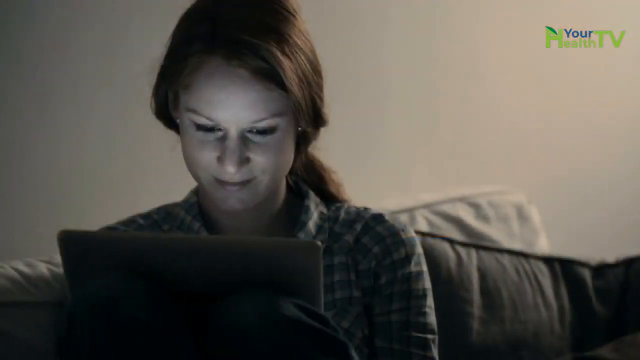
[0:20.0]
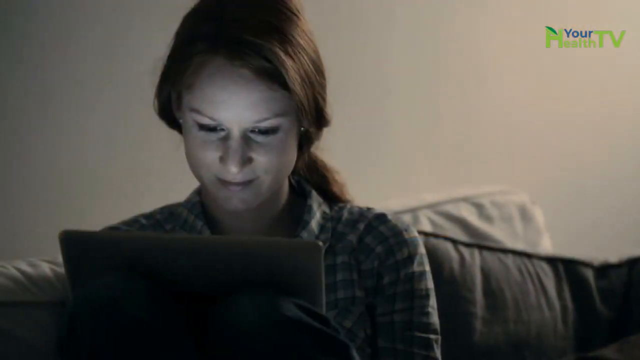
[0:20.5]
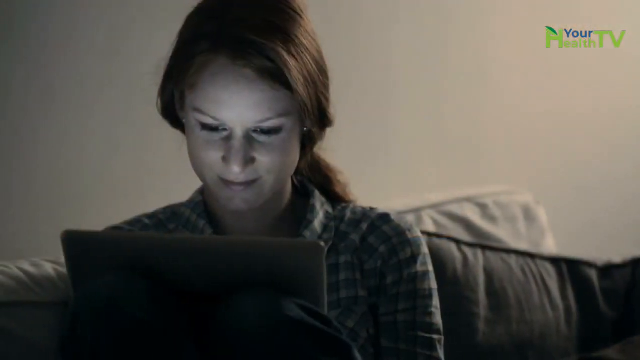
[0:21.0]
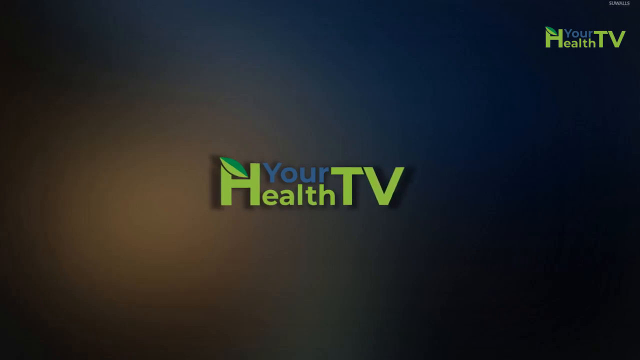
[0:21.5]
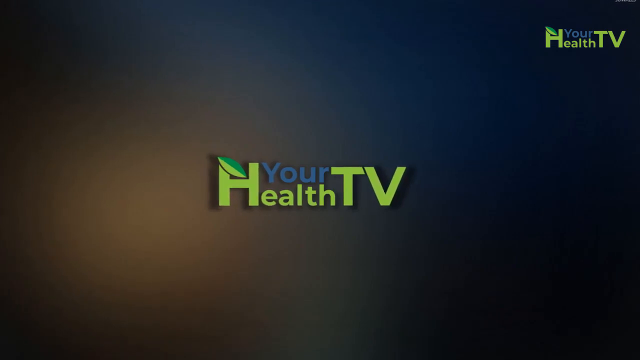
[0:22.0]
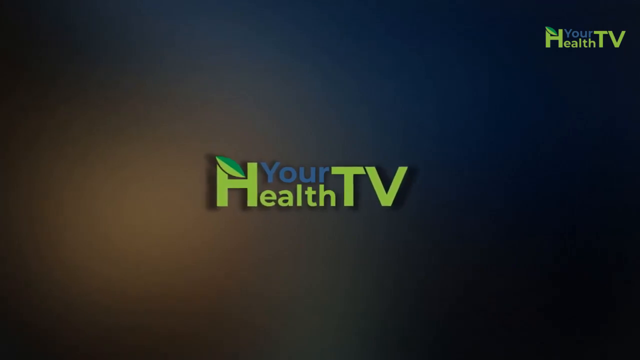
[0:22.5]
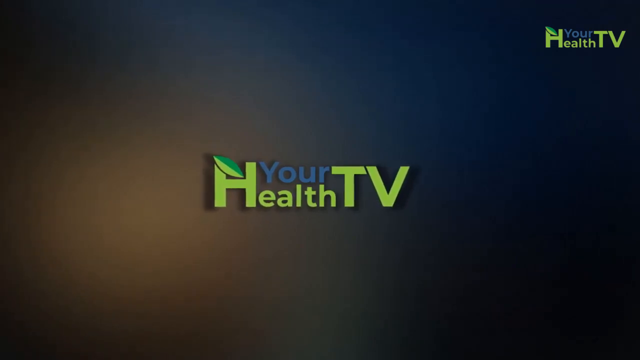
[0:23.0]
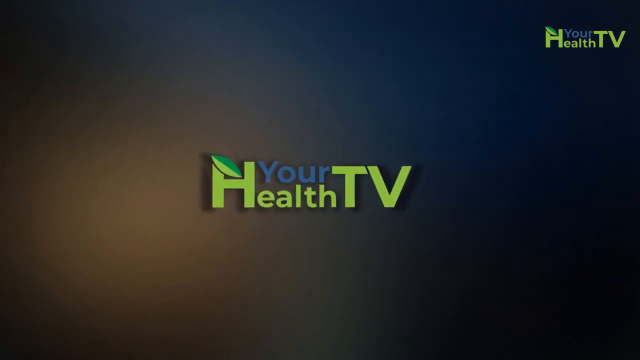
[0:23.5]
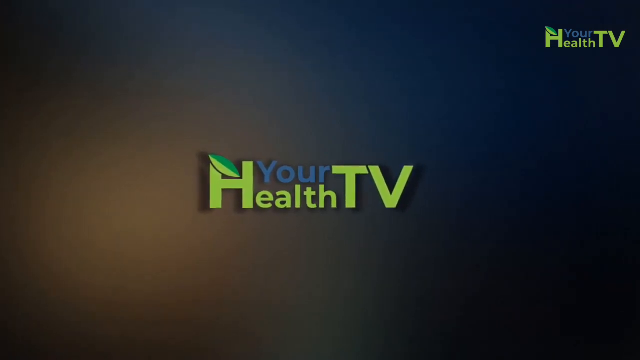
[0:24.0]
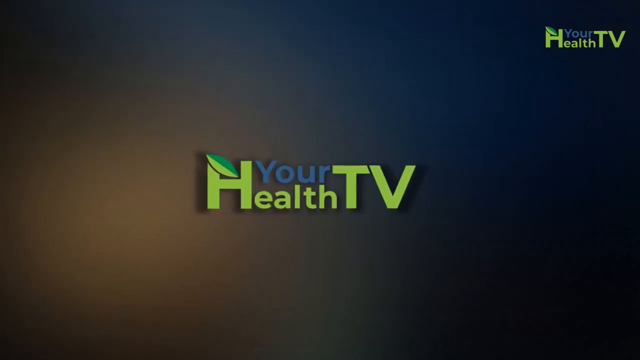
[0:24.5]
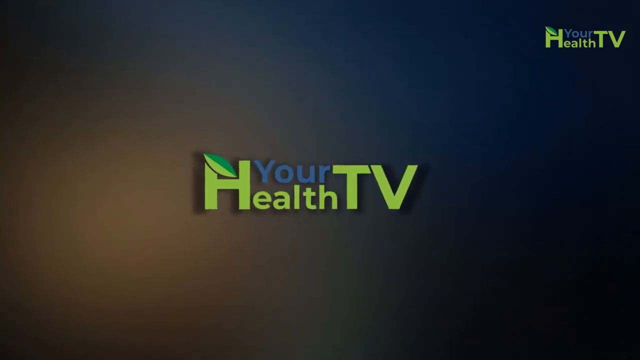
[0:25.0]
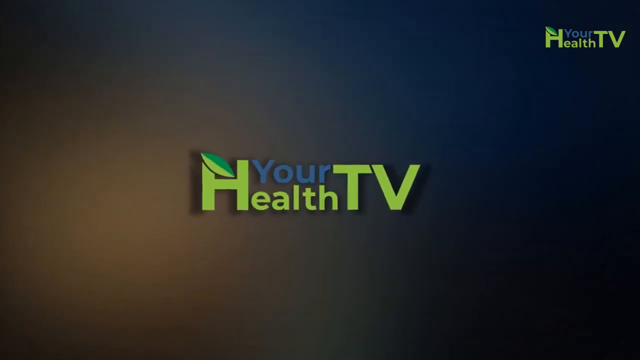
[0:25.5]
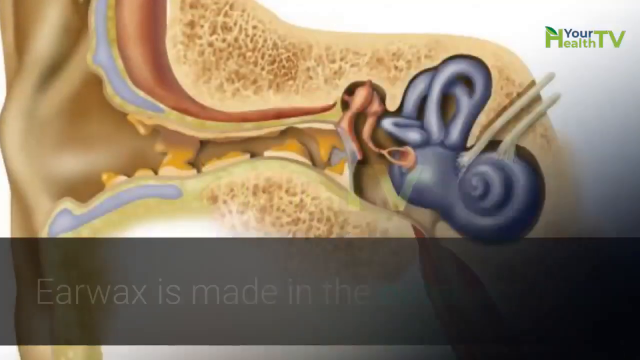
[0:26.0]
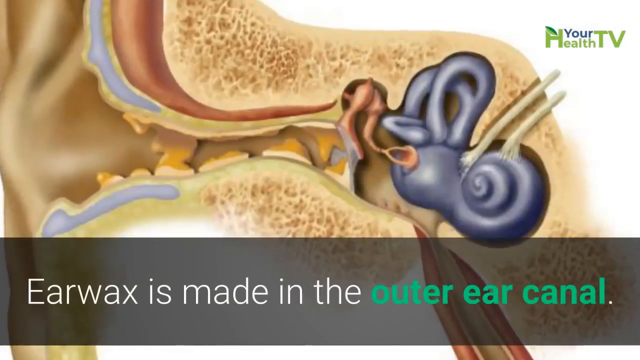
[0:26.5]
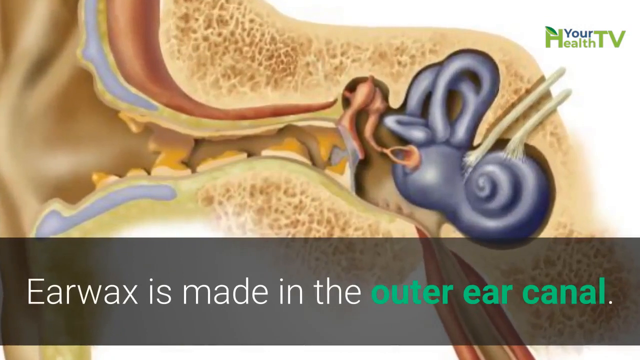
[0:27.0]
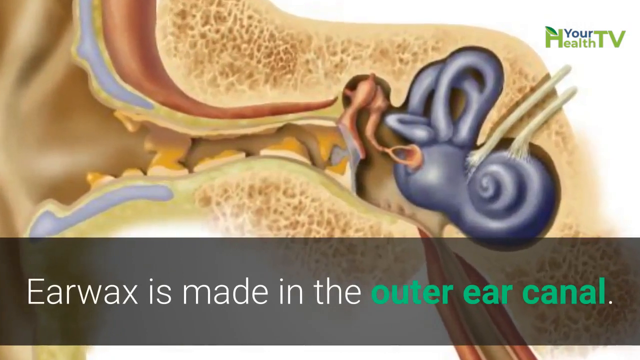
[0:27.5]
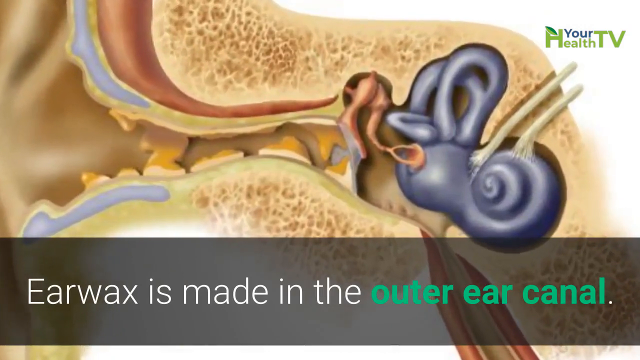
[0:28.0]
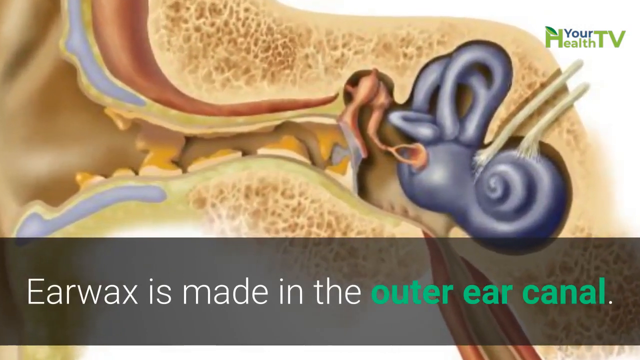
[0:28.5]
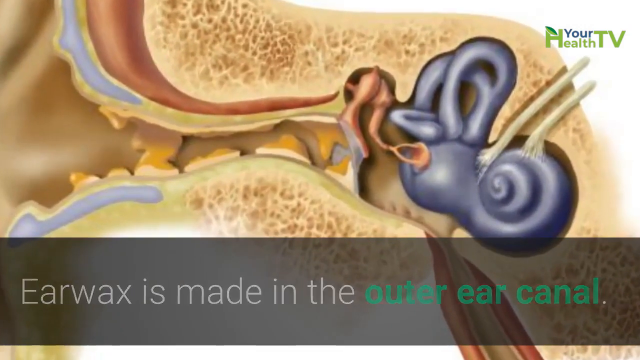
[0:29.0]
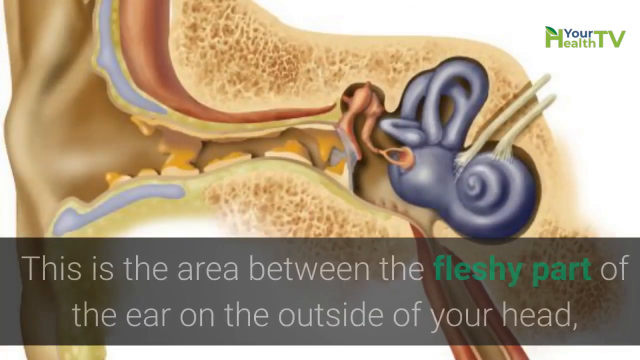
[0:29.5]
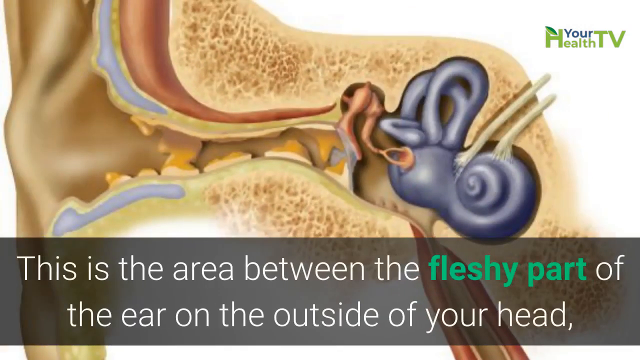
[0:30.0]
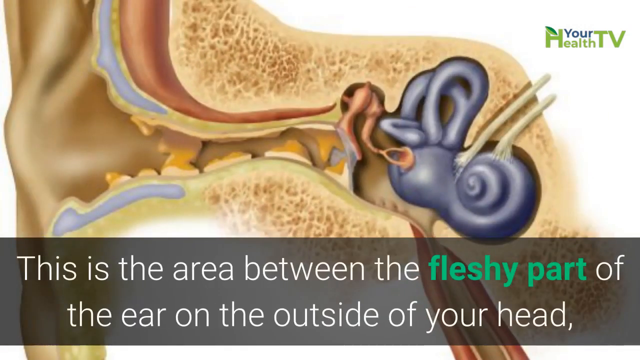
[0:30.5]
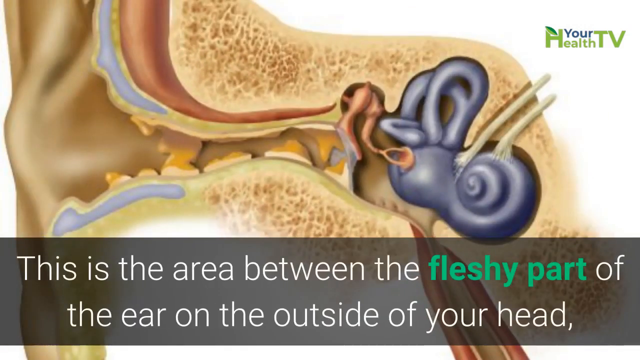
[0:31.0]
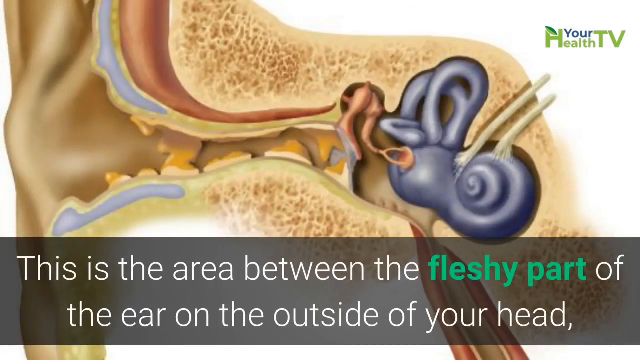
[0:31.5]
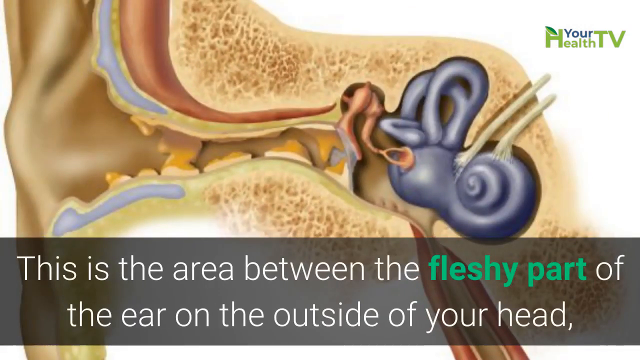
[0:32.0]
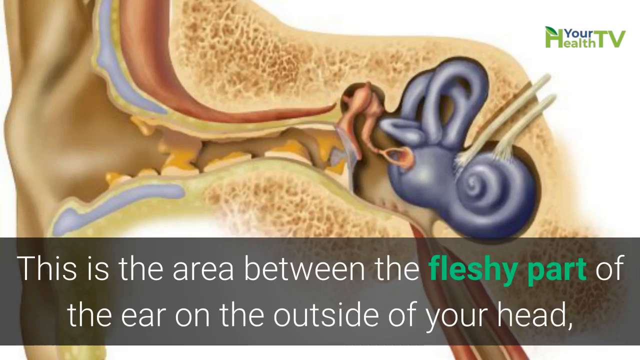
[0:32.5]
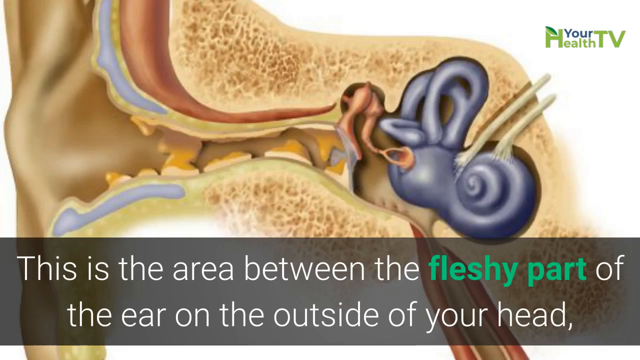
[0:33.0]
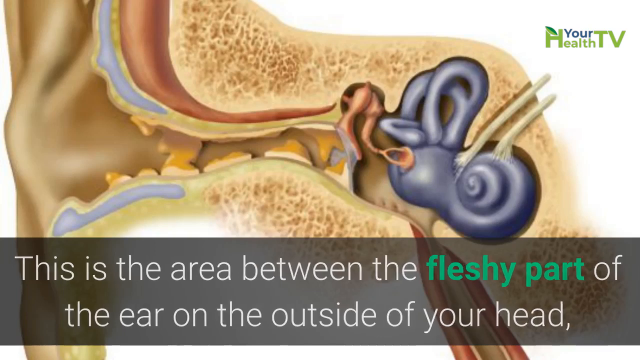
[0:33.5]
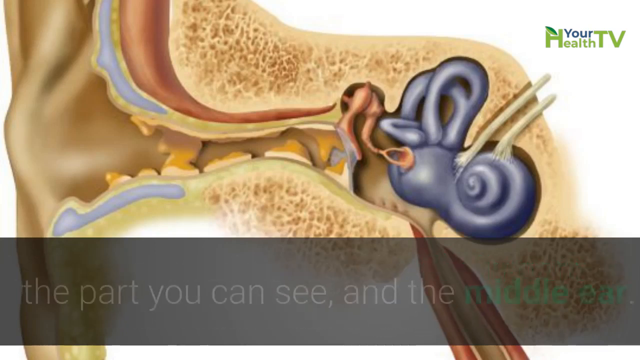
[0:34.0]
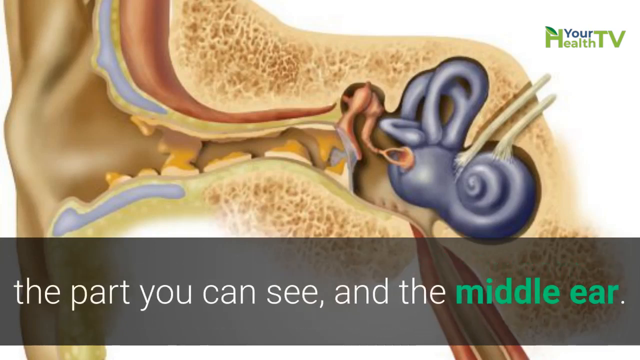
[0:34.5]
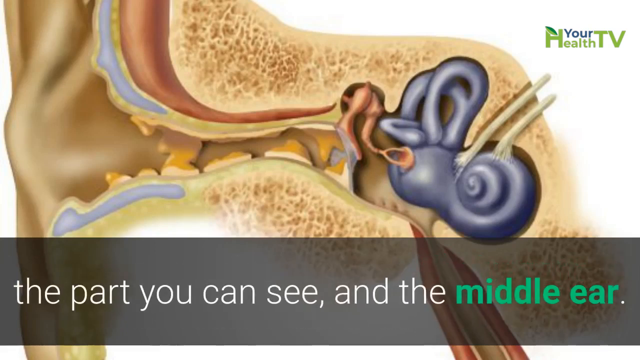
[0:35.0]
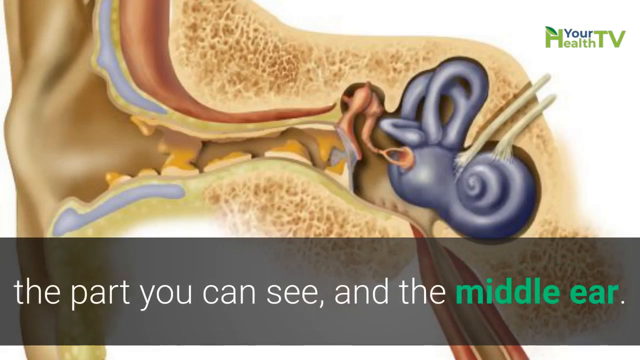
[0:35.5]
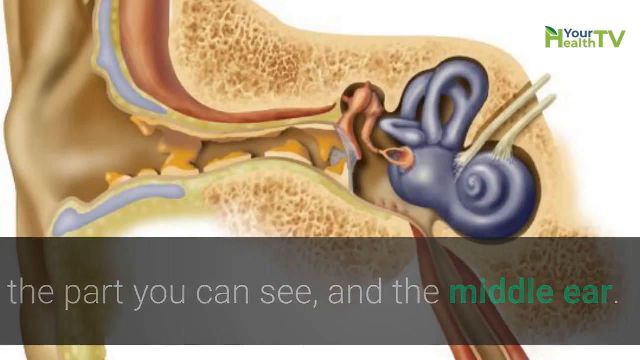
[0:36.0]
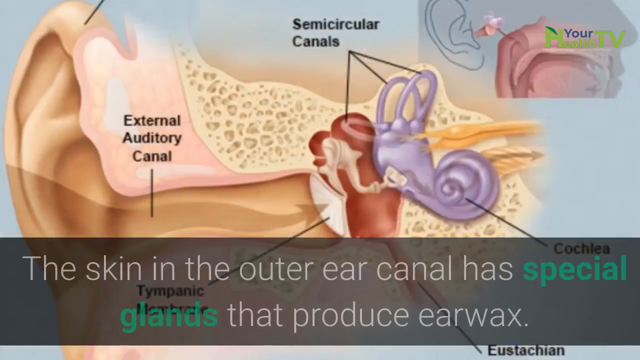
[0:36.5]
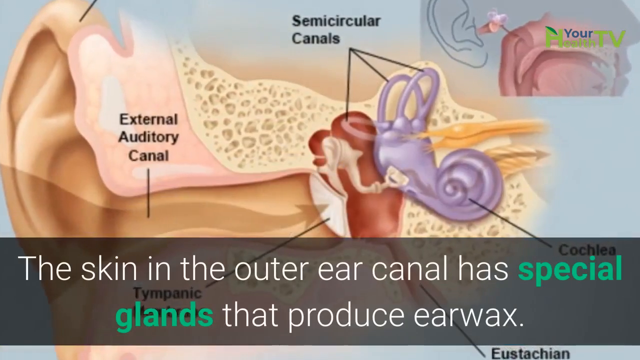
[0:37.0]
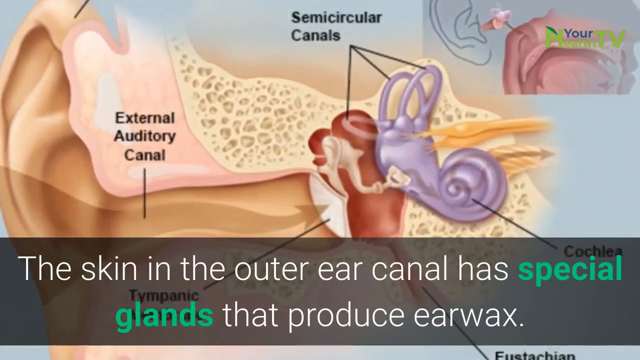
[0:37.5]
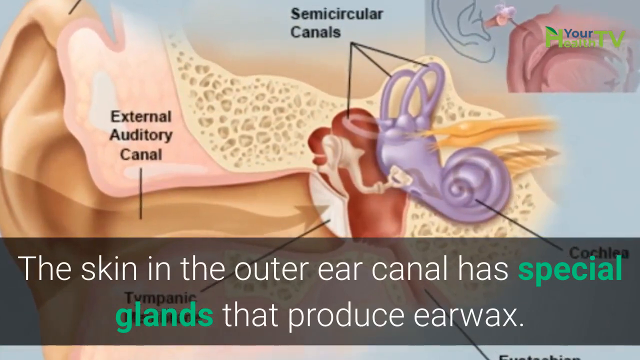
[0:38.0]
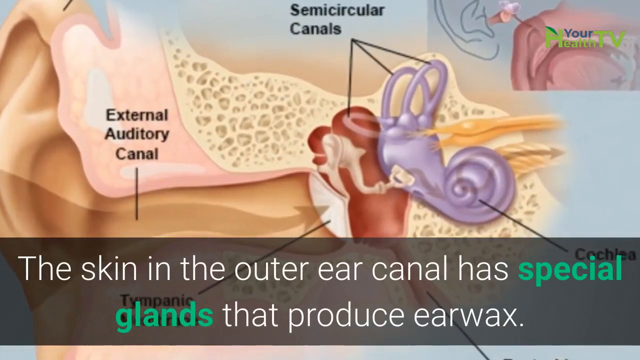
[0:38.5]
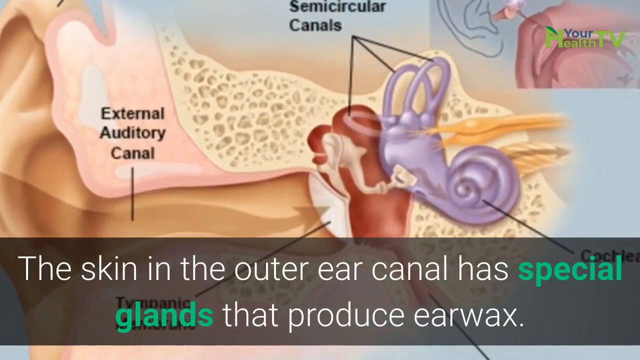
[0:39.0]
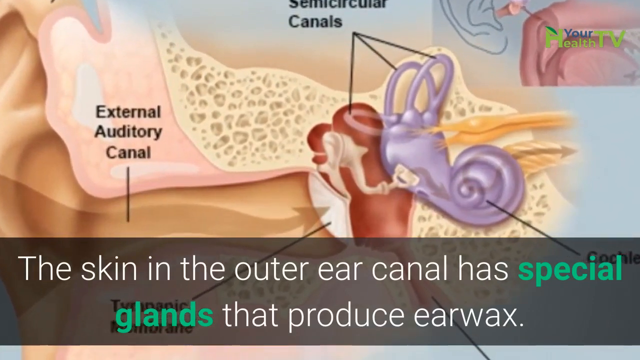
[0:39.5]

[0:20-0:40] The Your Health TV logo appears in the middle of the screen. Next comes a color diagram of an ear canal, a cross-section drawing in which each part of the ear is a different color, with the text "earwax is made in the outer ear canal" and "this is the area between the fleshy part of the ear on the outside of your head, the parts you can see, and the middle ear." A second illustration shows part of the ear and the ear canal with labeled areas: the semicircular canals, the external auditory canal, the tympani and the cochlea. Text reads "the skin in the outer ear canal has special glands that produce earwax."